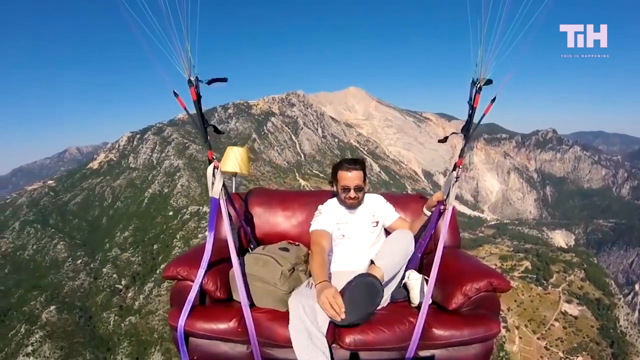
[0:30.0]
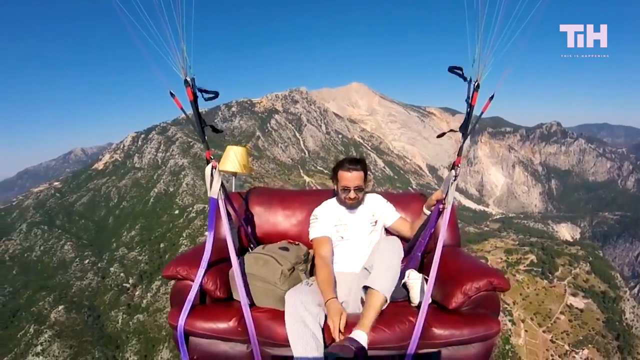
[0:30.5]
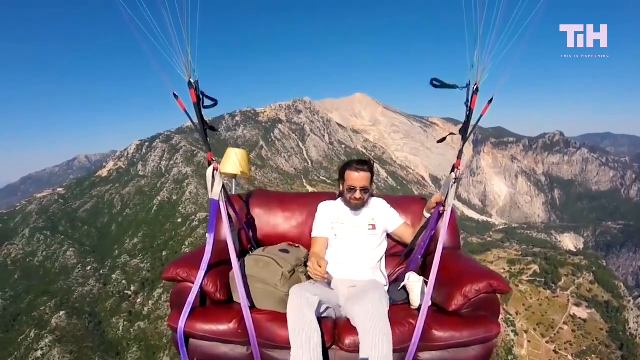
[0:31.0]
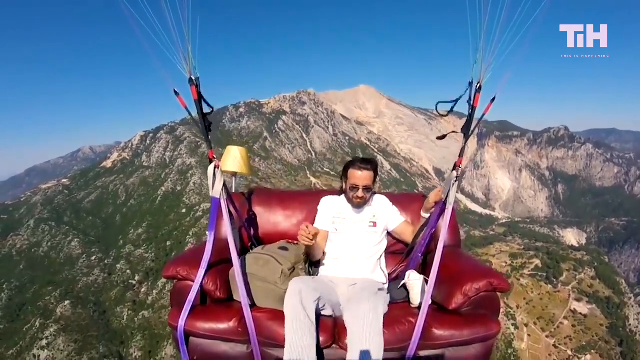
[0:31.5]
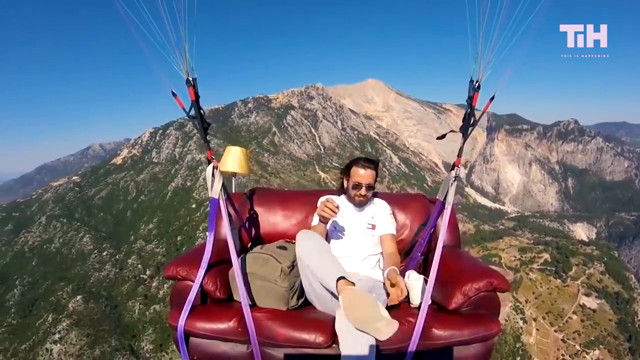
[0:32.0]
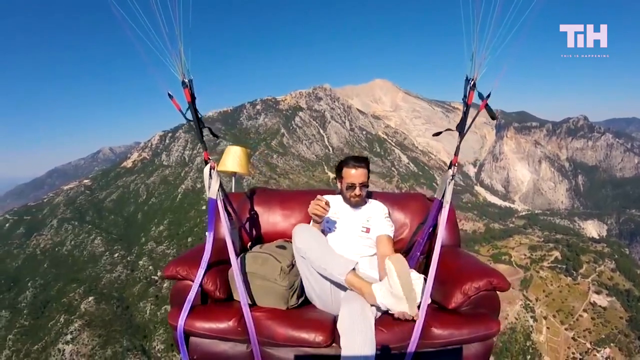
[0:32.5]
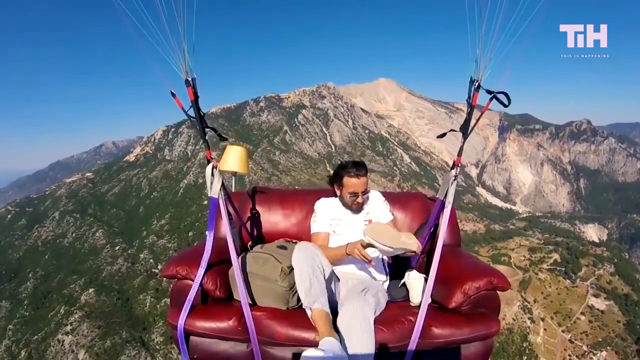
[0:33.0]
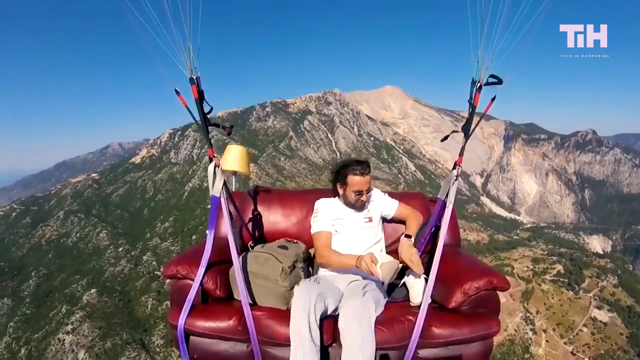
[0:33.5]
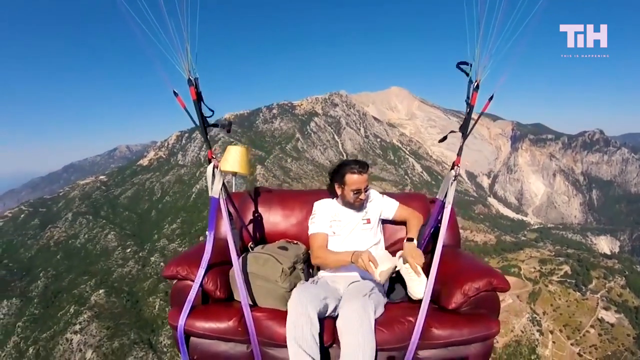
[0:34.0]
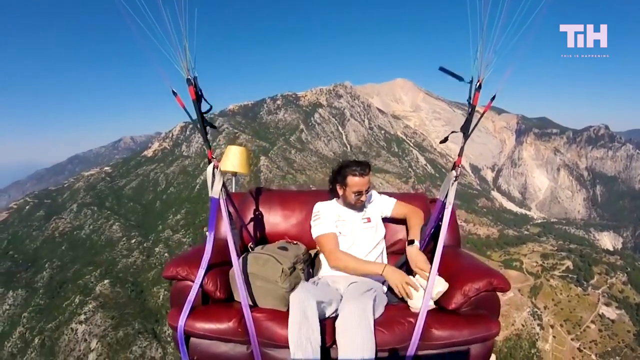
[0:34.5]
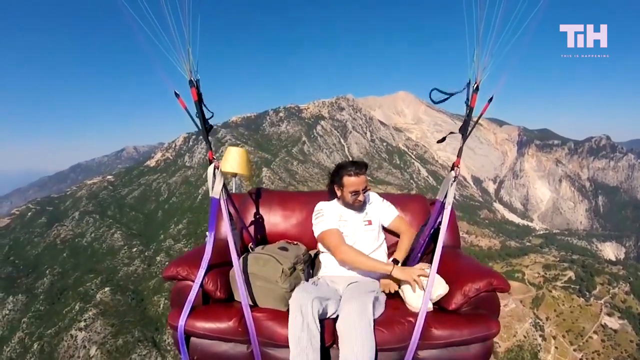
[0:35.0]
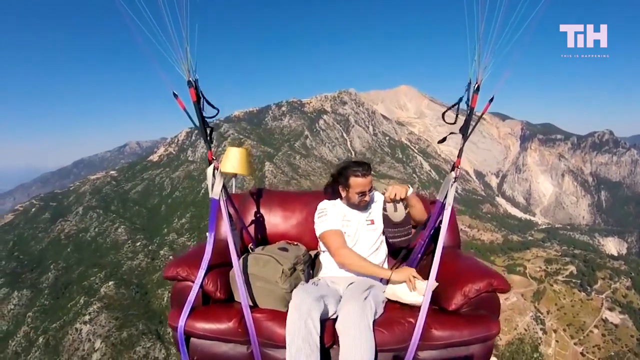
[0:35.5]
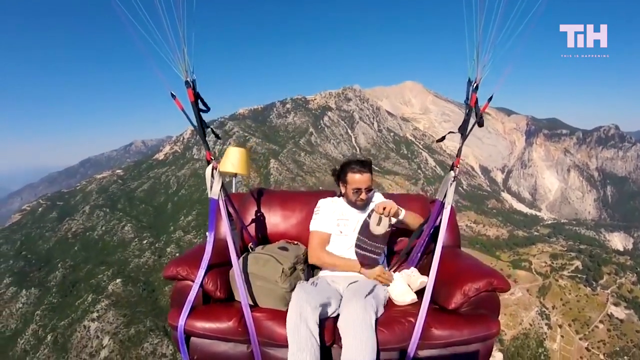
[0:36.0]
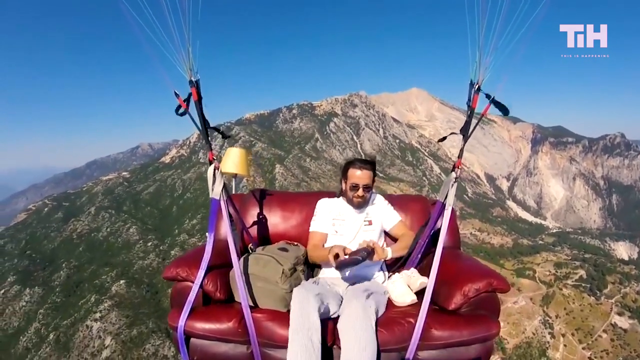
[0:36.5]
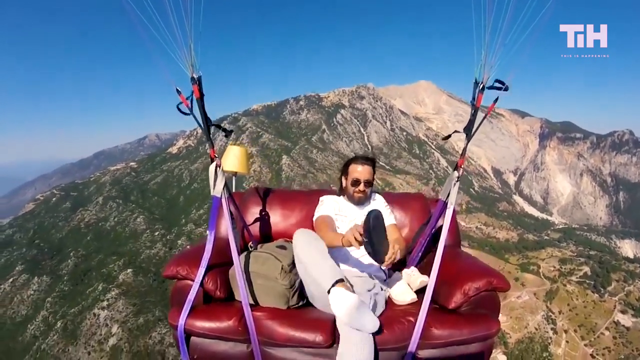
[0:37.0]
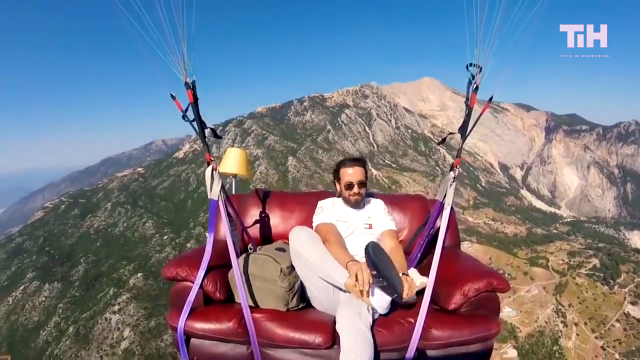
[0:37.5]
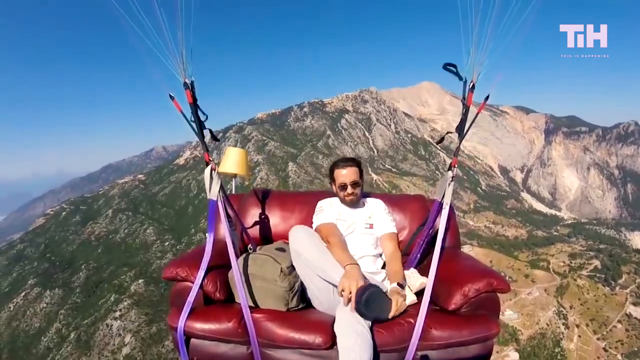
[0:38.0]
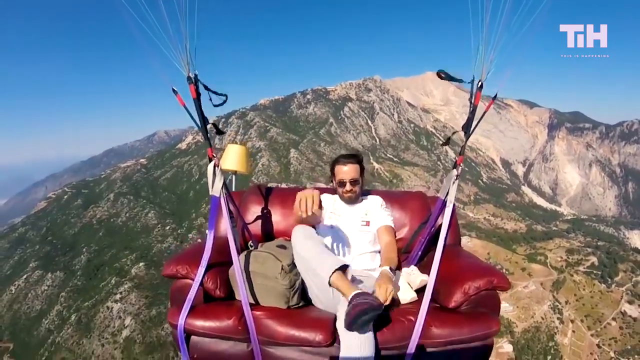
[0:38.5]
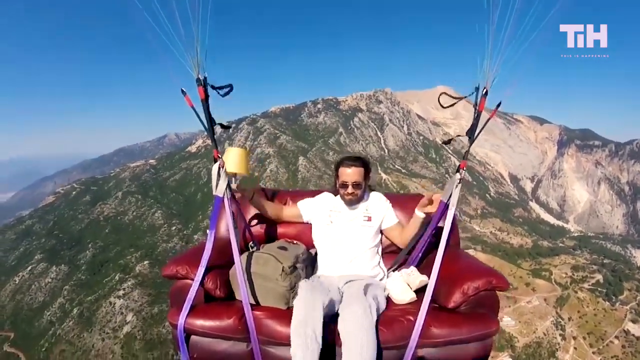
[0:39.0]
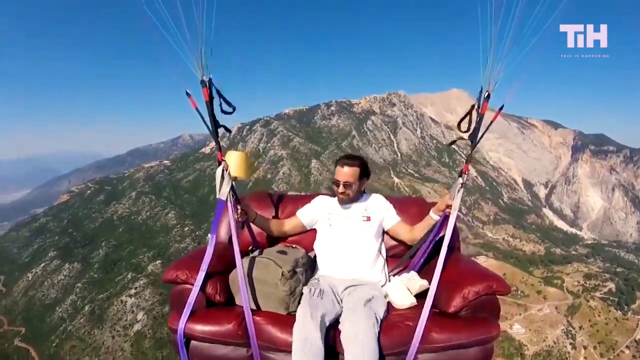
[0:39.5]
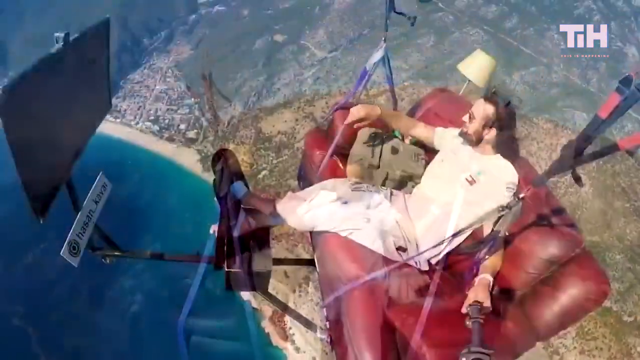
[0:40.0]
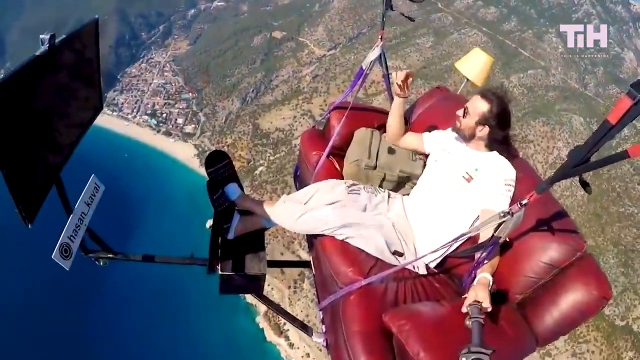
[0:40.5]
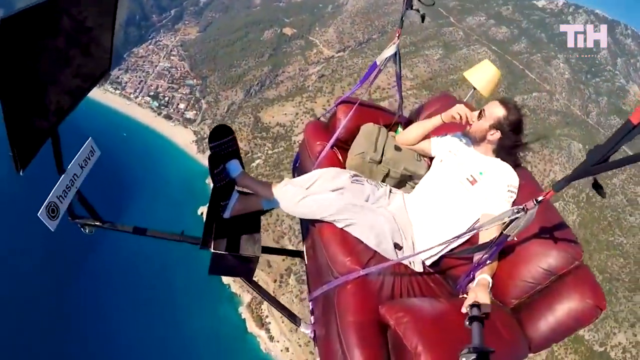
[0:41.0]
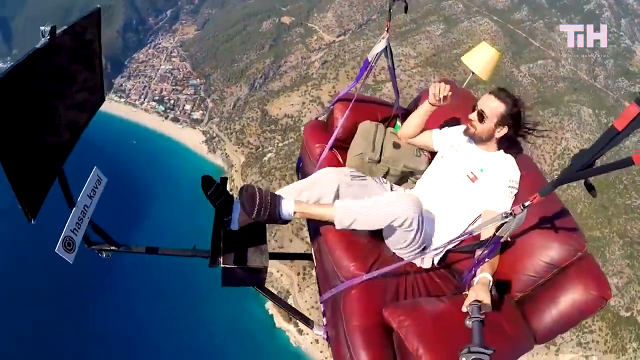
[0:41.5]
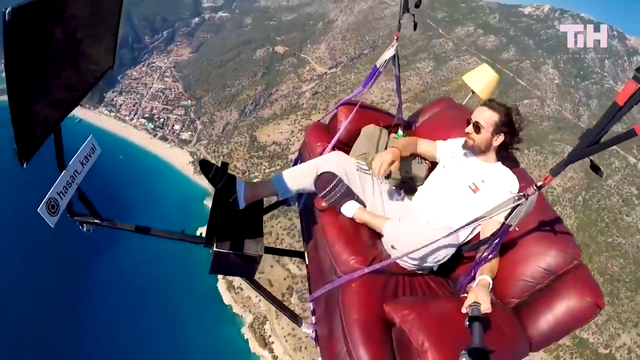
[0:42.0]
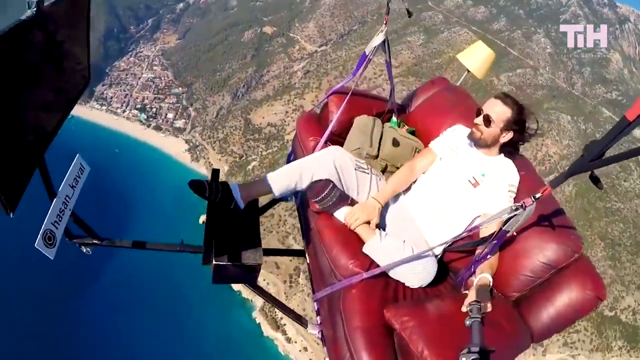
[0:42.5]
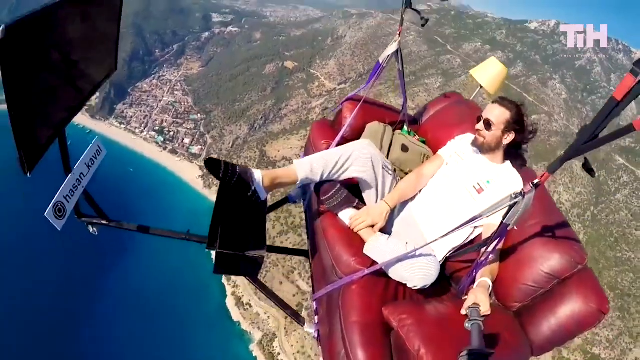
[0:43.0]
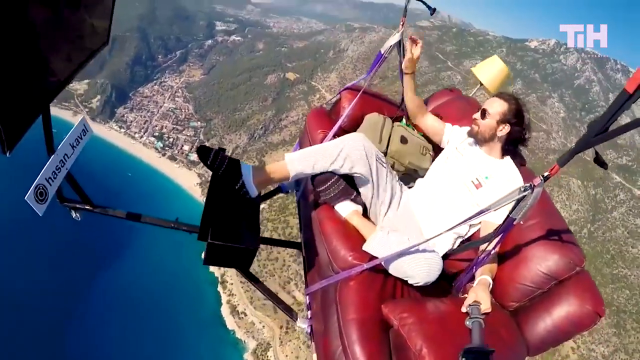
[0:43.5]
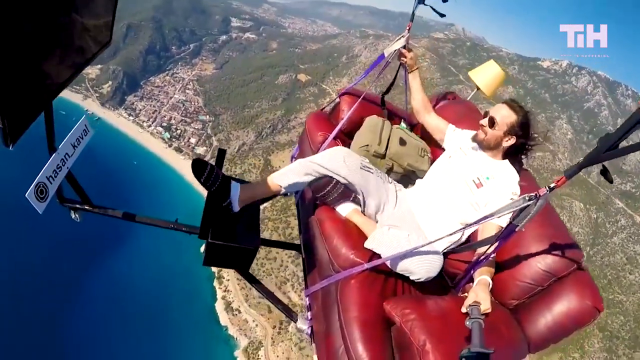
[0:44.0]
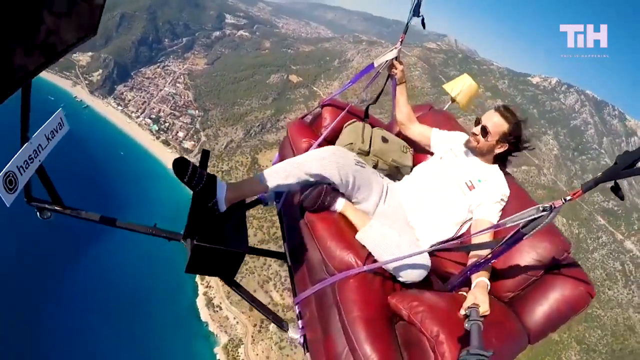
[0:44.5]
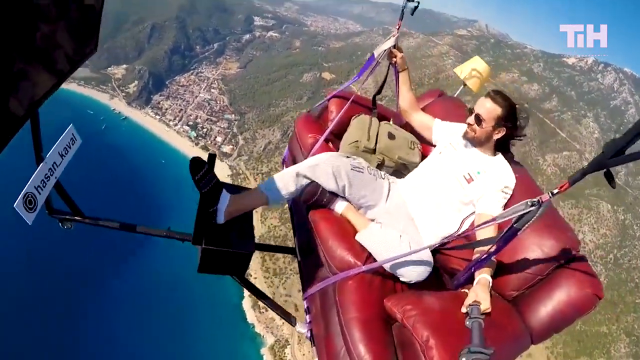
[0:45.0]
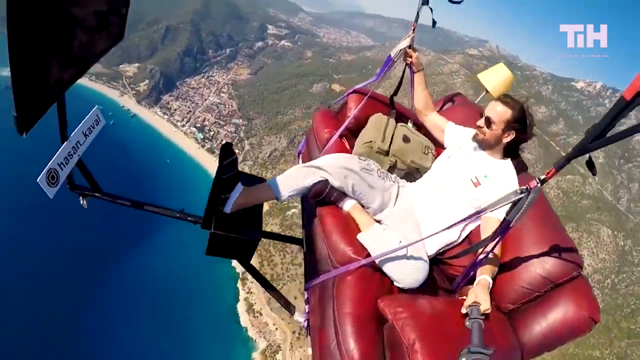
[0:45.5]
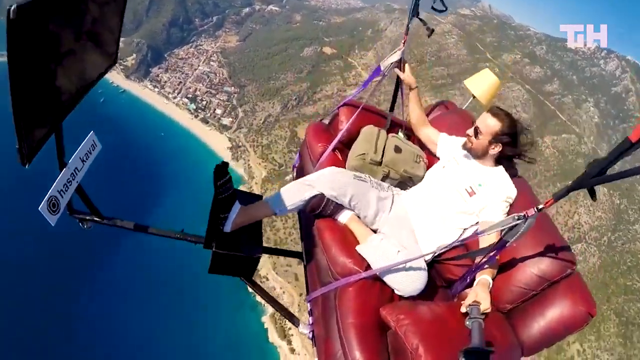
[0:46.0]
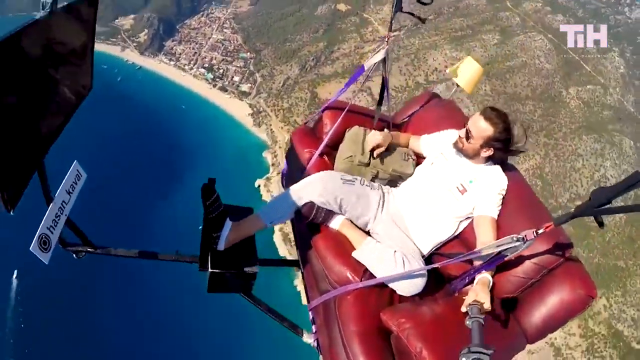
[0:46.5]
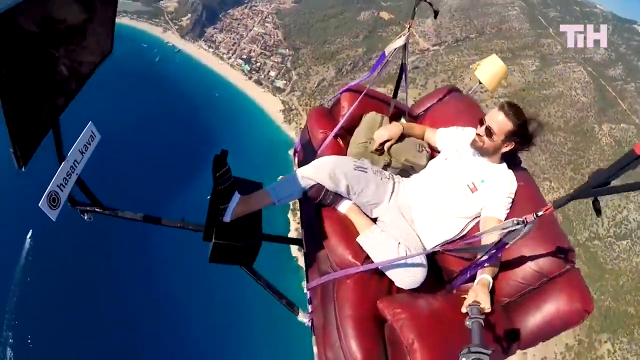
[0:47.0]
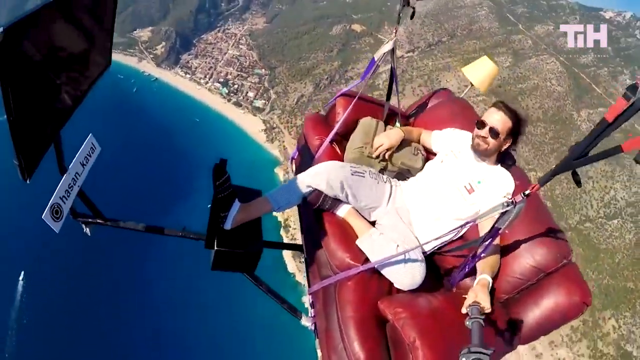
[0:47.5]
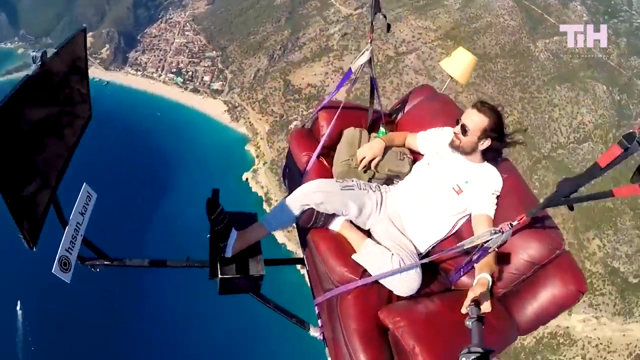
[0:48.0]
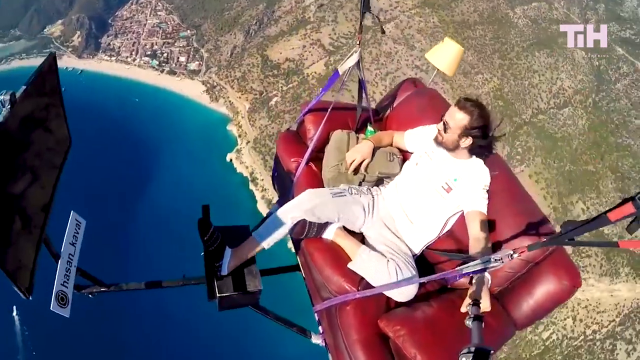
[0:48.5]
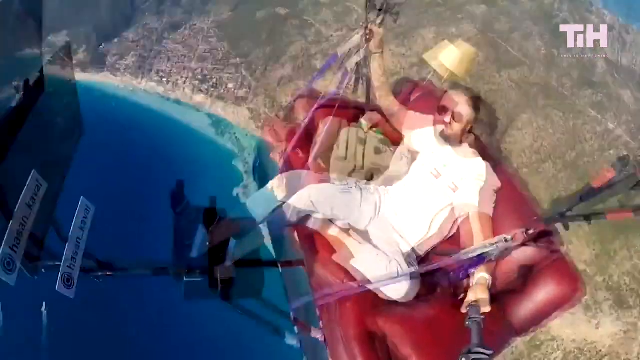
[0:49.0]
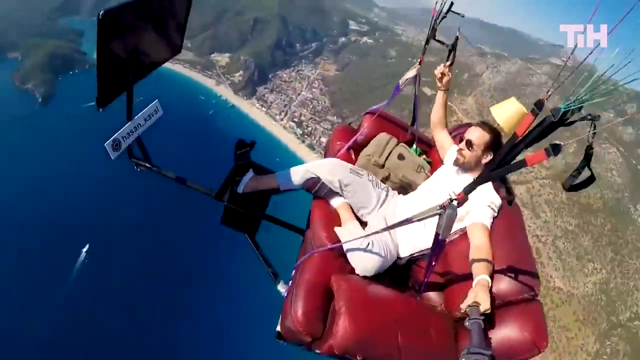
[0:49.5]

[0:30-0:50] A man is being airlifted on a couch attached to bungee cords, which are attached to parachutes. The couch is maroon and the size of a loveseat. A khaki backpack has been placed on the couch to his right, and a white lace-up tennis shoe is to his left on the couch. There is a straw-colored table lamp behind the couch. In the background is the mountainside as he is airlifted over the mountains and a lake. He wears khaki pants, a white t-shirt and brown sunshades. He is a Caucasian man with brown hair combed back, a brown mustache and a brown beard, with a bracelet on his right wrist and a watch on his left wrist. He holds on to the bungee cord straps with his left hand as he flies, taking off his white tennis shoes and putting on brown slippers. A shot then shows him flying over a lake at the basin of a mountainside. He does not appear to be wearing any seat belt or harness, and his feet rest on a box attached to the flying device.